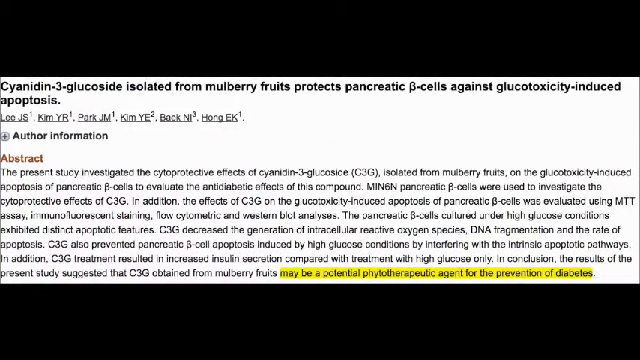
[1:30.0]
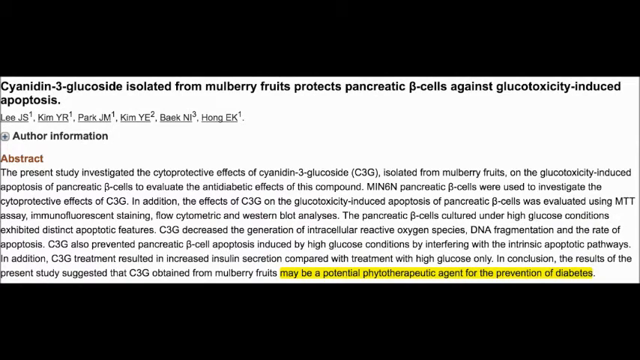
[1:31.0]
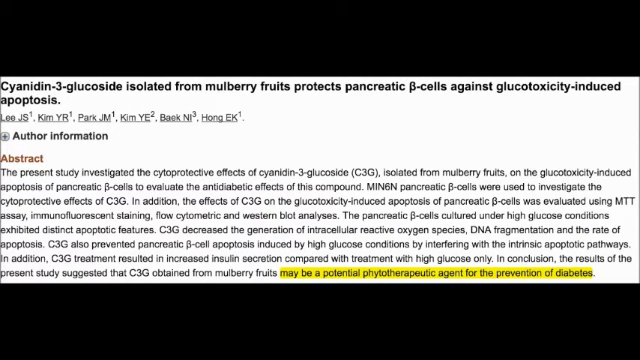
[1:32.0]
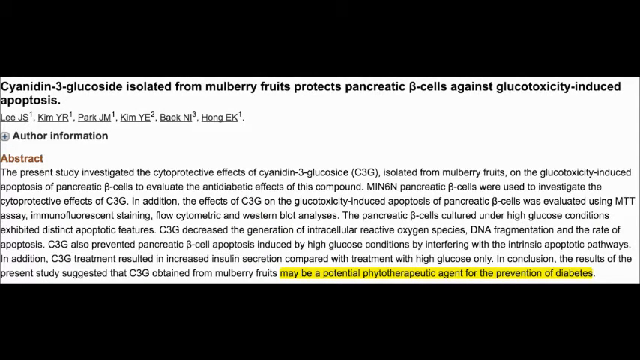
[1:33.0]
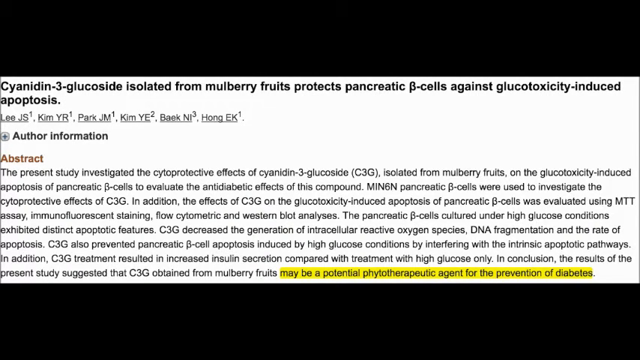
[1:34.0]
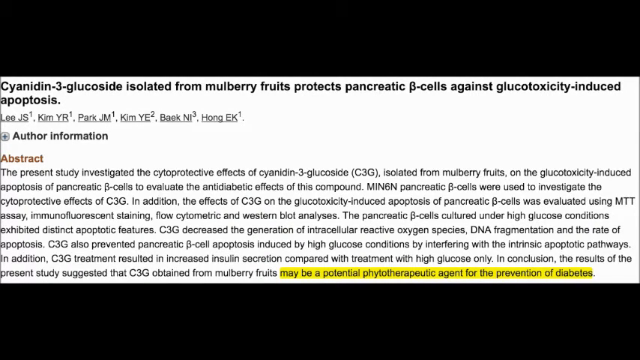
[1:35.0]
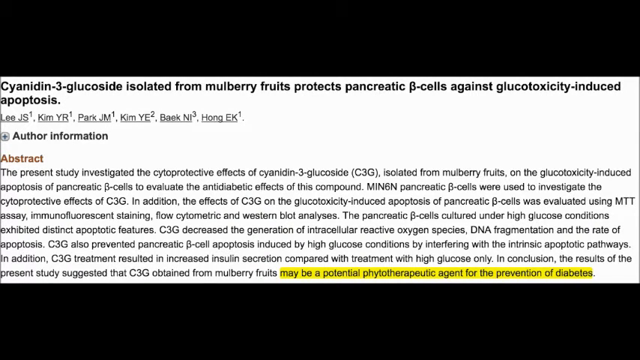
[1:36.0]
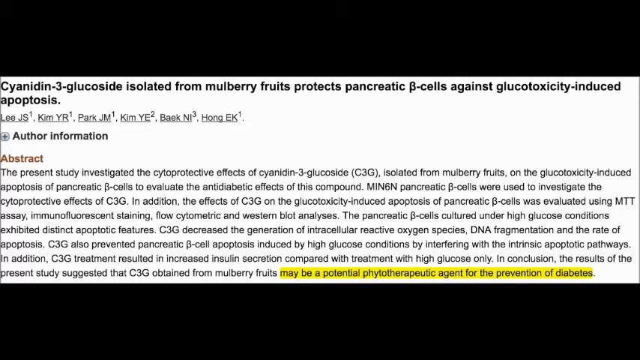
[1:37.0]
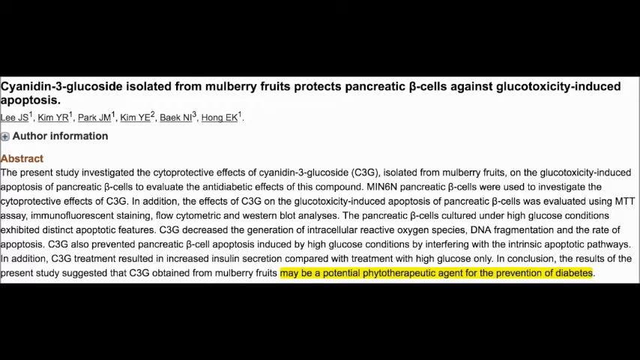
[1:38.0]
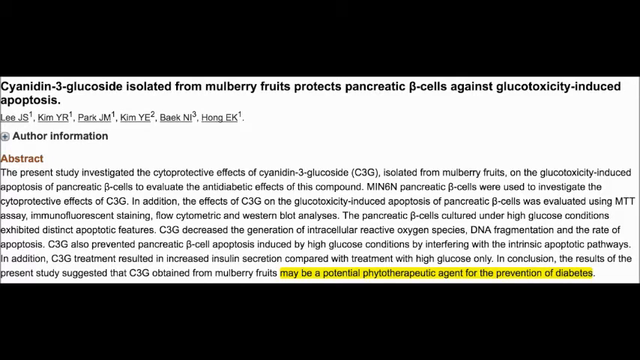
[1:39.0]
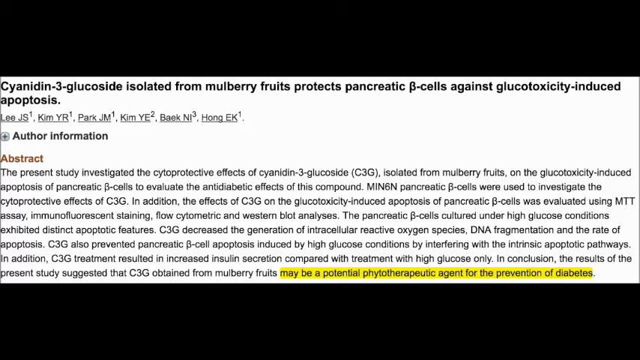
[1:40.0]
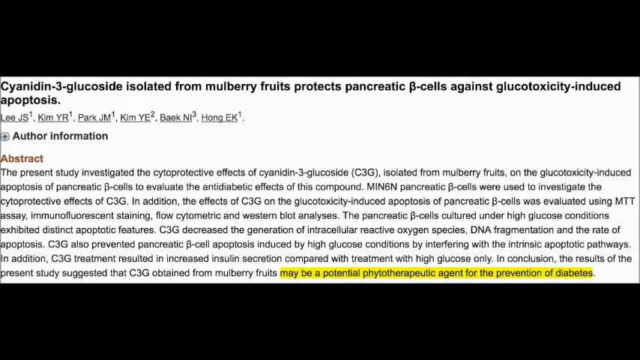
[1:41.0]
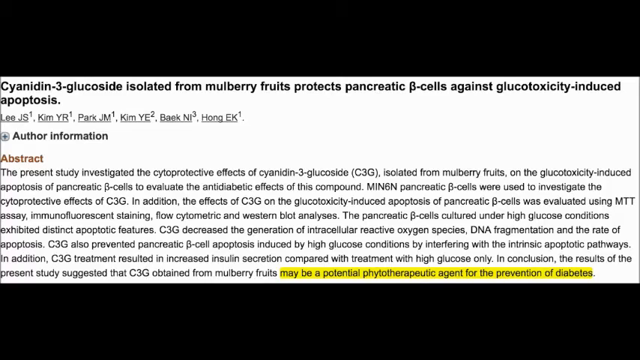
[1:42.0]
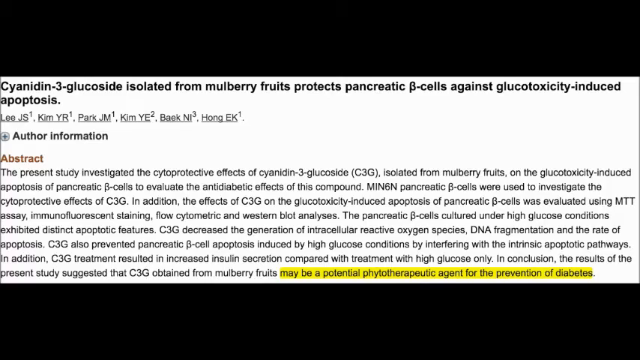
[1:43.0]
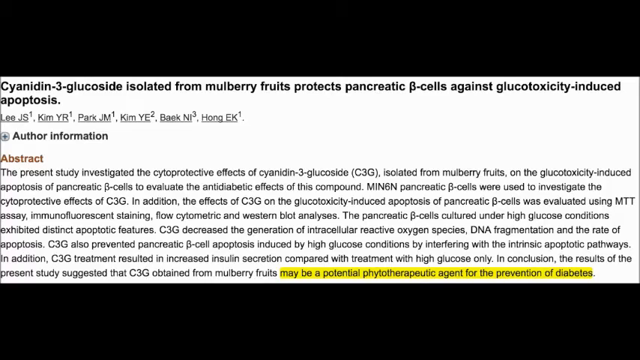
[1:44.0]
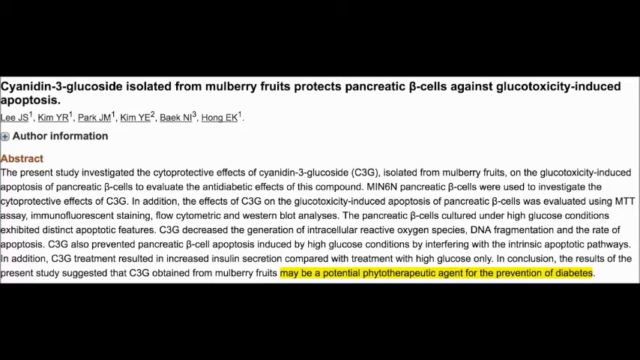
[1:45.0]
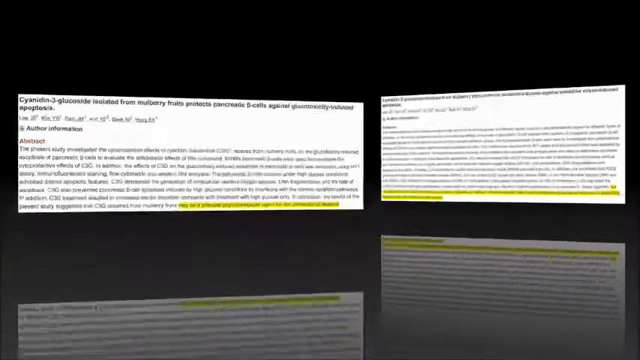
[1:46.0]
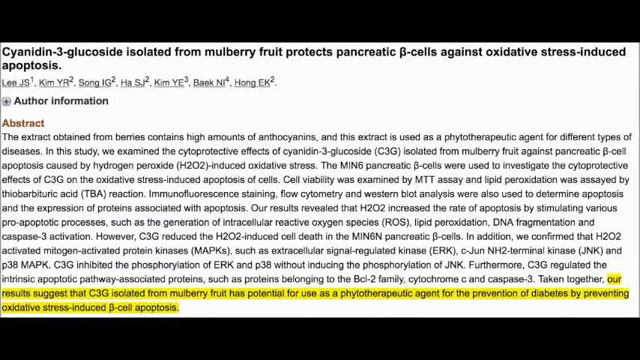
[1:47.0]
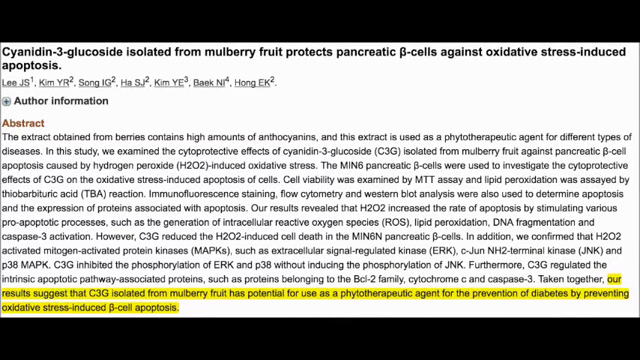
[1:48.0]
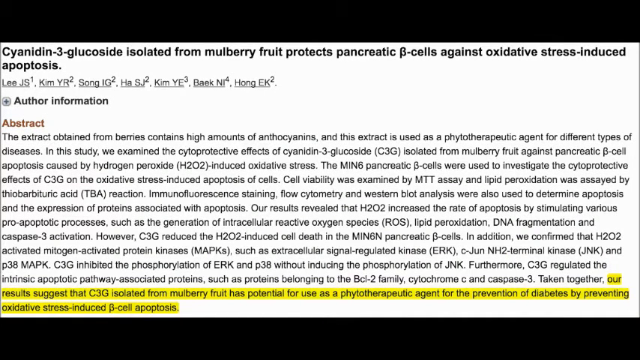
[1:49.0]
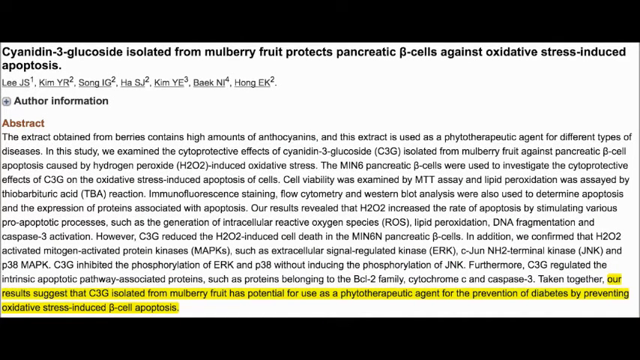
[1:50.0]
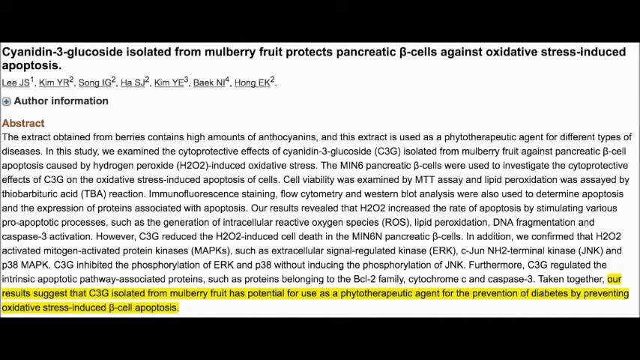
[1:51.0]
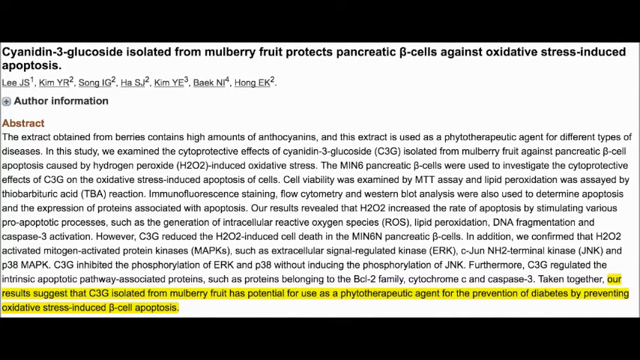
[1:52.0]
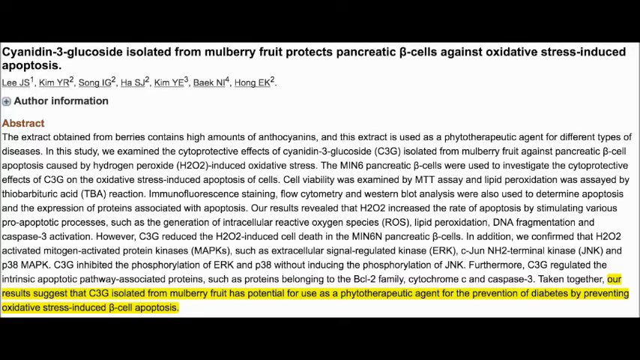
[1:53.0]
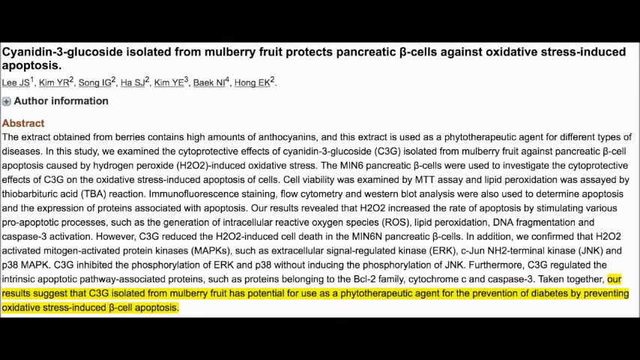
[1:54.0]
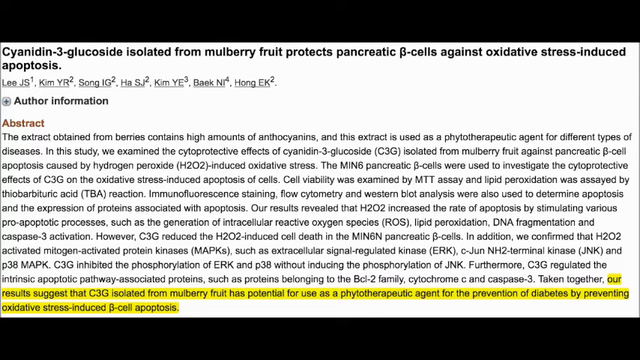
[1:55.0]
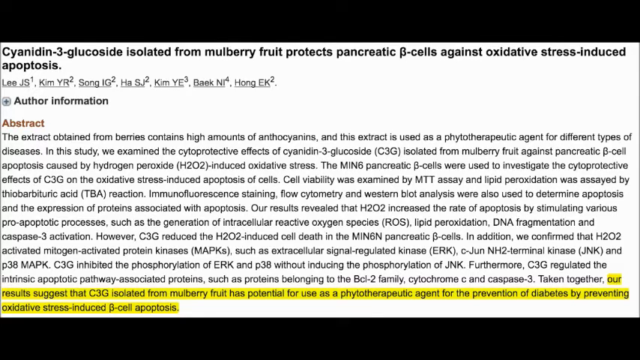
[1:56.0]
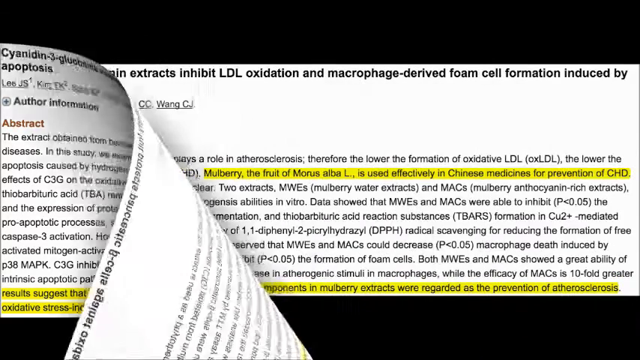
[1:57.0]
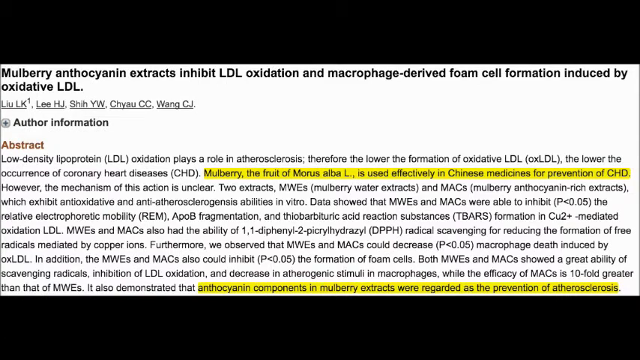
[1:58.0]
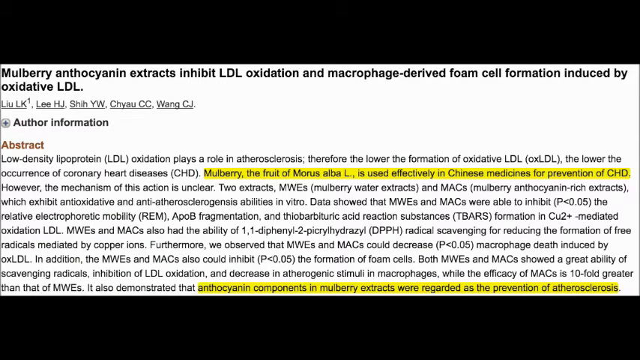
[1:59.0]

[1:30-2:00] A scientific research study is on the screen, titled "Cyanidin-3-Glucoside Isolated from Mulberry Fruits Protects Pancreatic B-Cells Against Glucotoxicity-Induced Apoptosis." The study investigated the cytoprotective effects of cyanidin-3-glucoside, or C3G, isolated from mulberry fruits, on glucotoxicity-induced apoptosis of pancreatic B-cells. A highlighted section reads "the results of the present study suggested that the C3G obtained from mulberry fruits may be a potential phytotherapeutic agent for the prevention of diabetes." The next study to appear states that the glucoside isolated from mulberry fruits protects pancreatic B cells against oxidative stress, and its highlighted portion reads "our results suggest that the C3G isolated from mulberry fruit has potential for use as a phytotherapeutic agent for the prevention of diabetes by preventing oxidative stress."